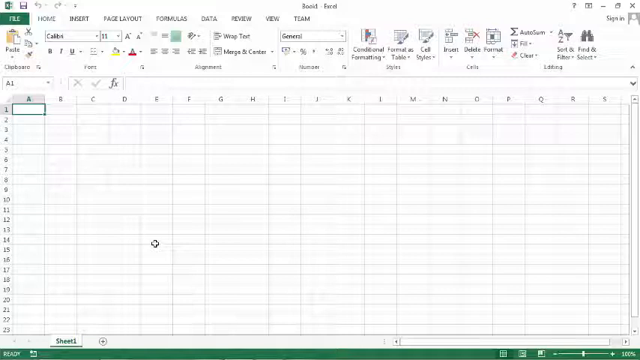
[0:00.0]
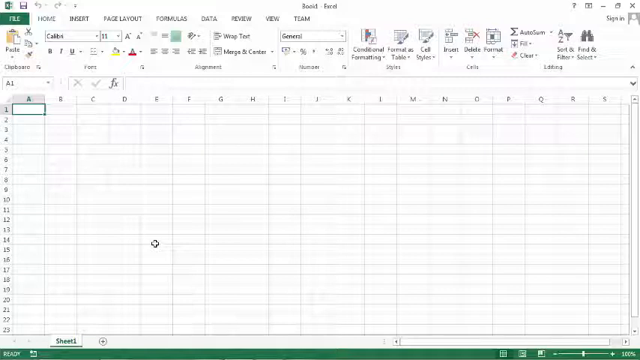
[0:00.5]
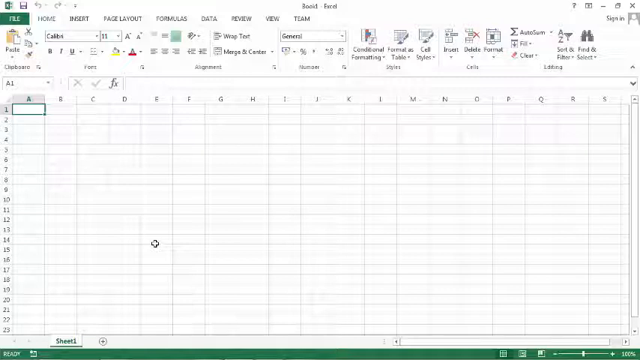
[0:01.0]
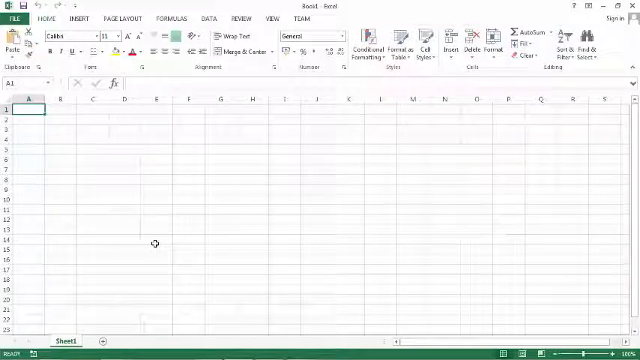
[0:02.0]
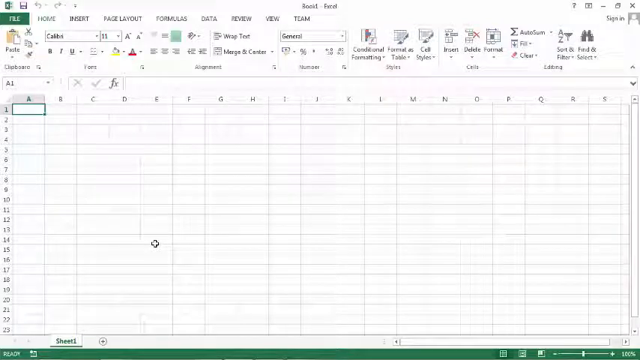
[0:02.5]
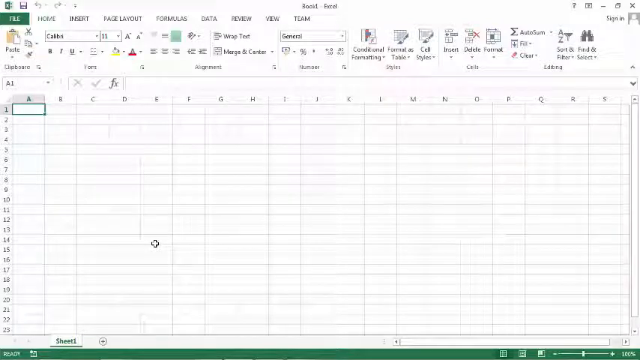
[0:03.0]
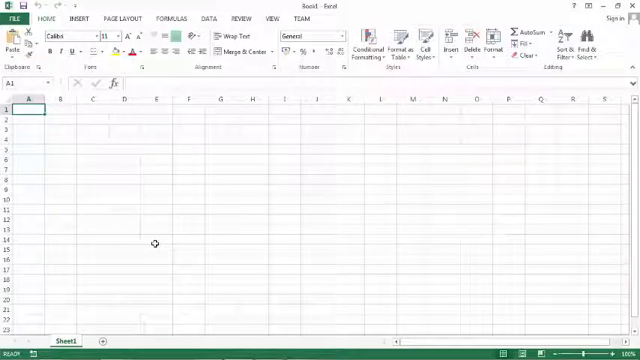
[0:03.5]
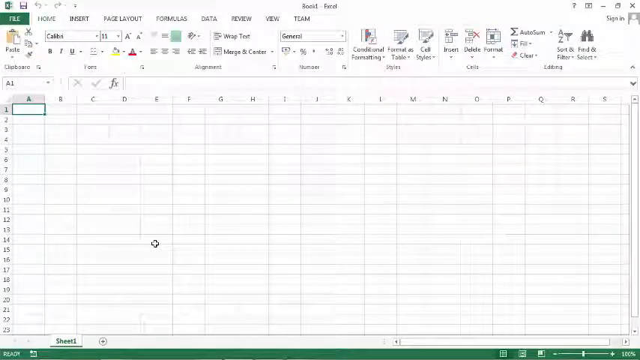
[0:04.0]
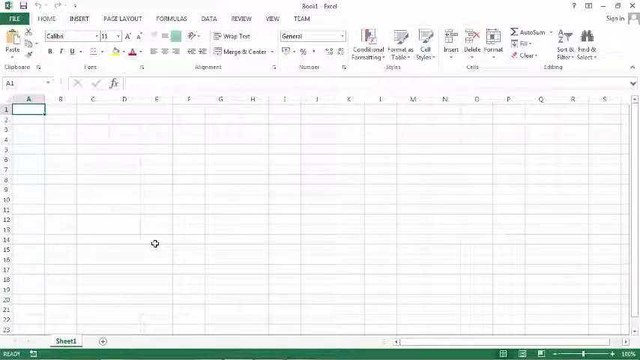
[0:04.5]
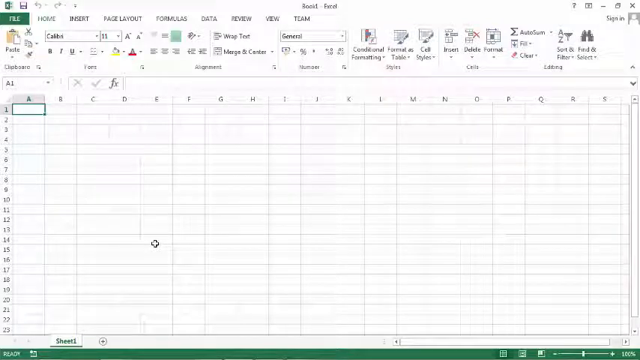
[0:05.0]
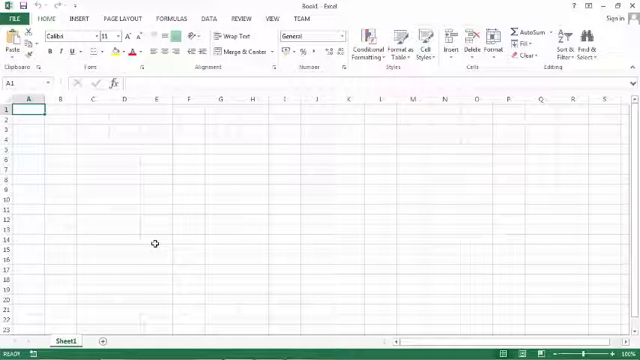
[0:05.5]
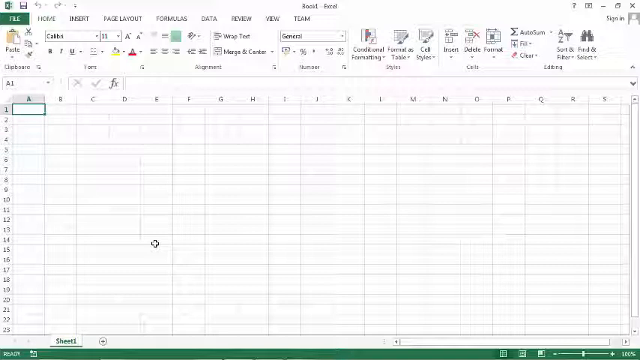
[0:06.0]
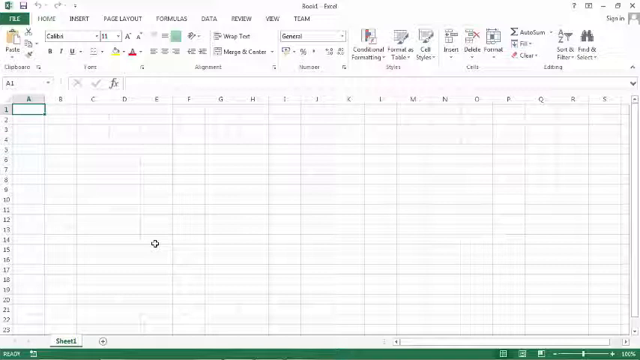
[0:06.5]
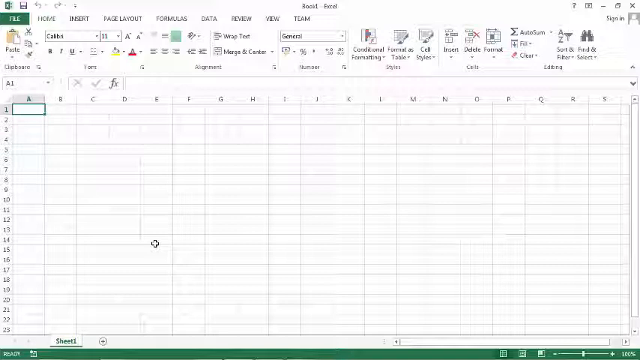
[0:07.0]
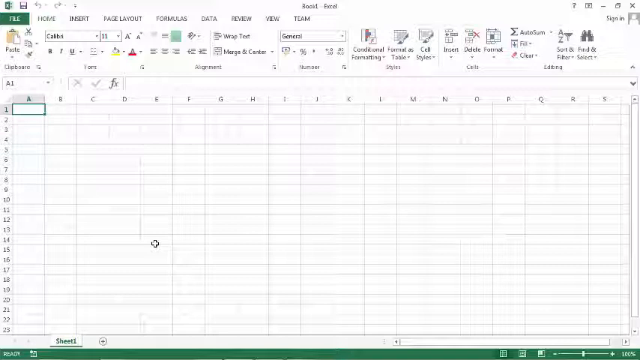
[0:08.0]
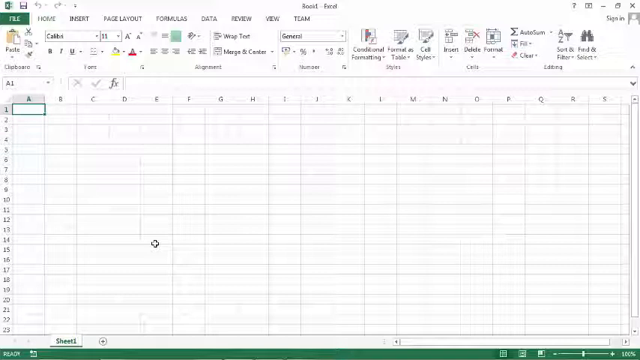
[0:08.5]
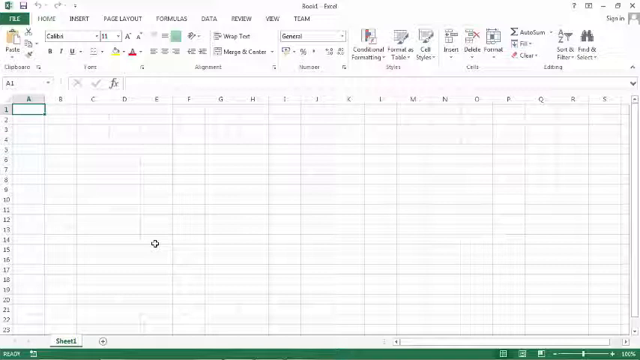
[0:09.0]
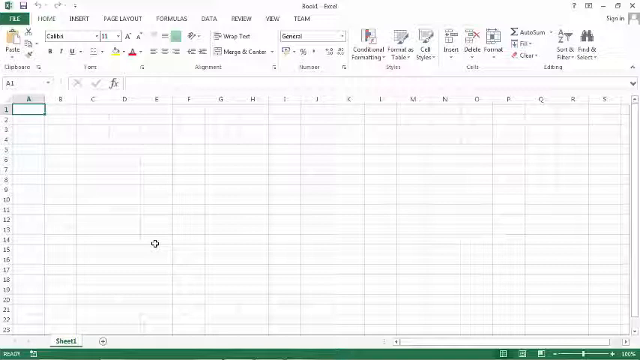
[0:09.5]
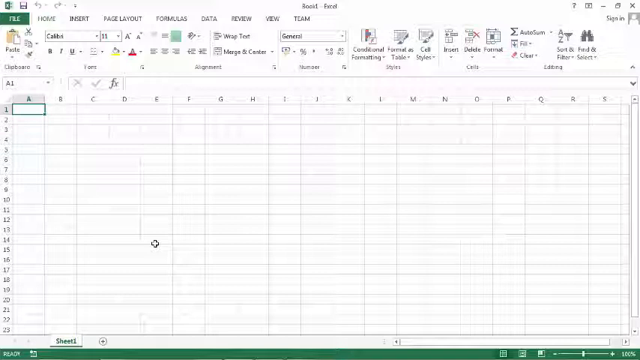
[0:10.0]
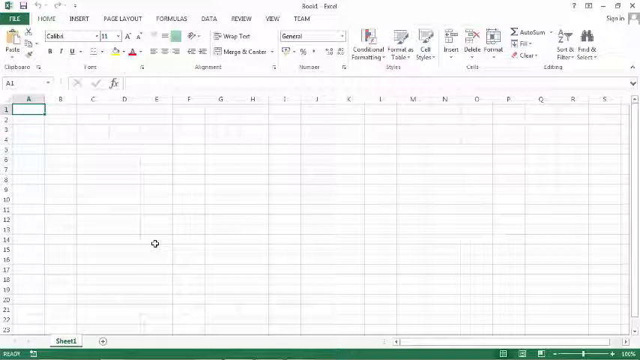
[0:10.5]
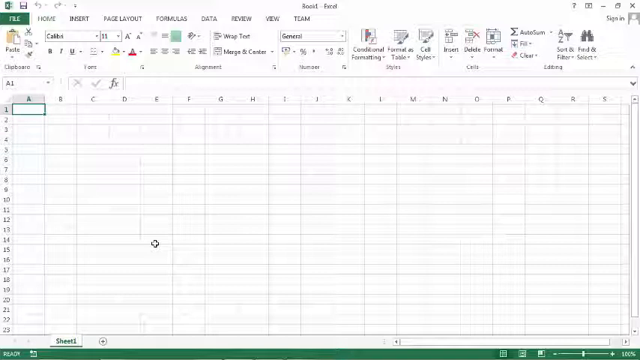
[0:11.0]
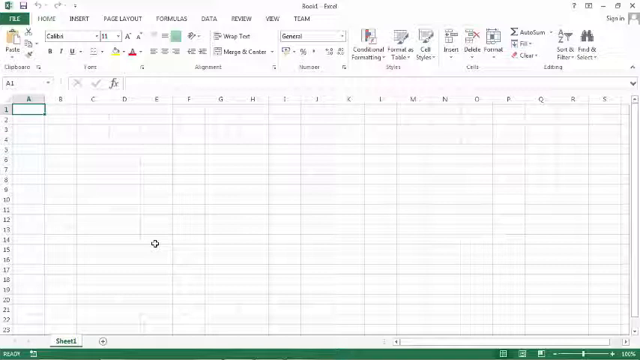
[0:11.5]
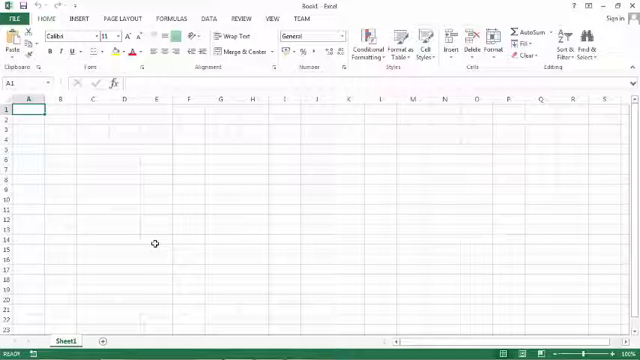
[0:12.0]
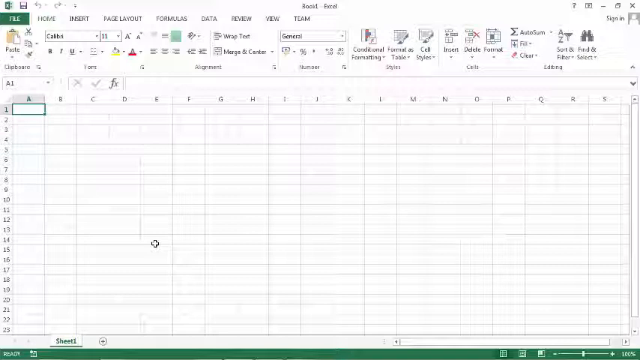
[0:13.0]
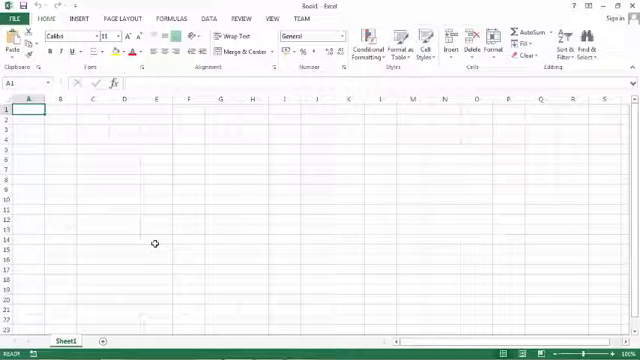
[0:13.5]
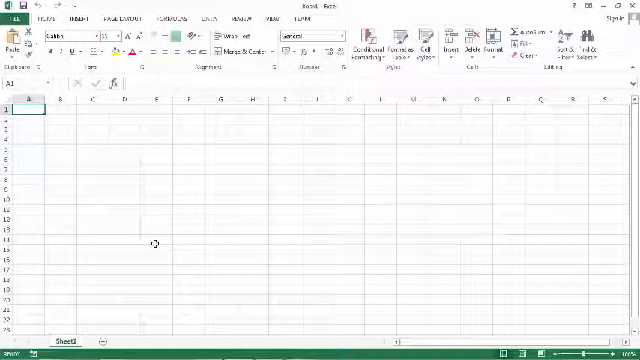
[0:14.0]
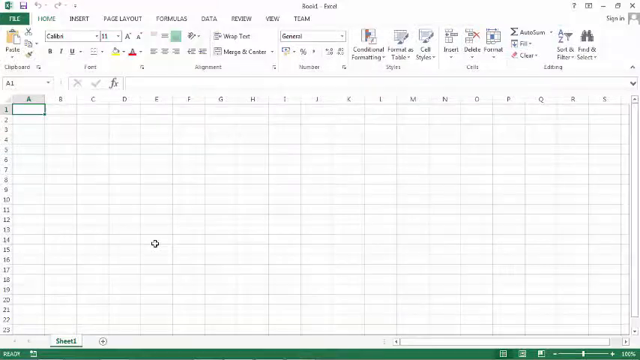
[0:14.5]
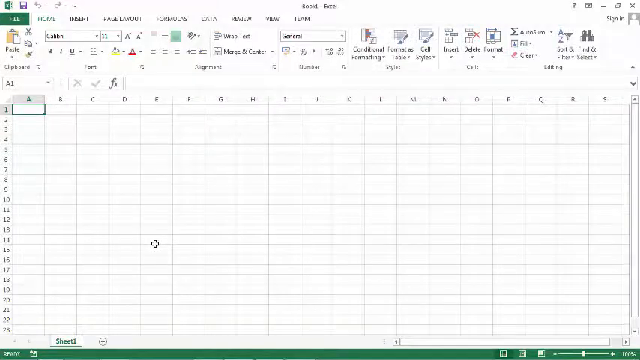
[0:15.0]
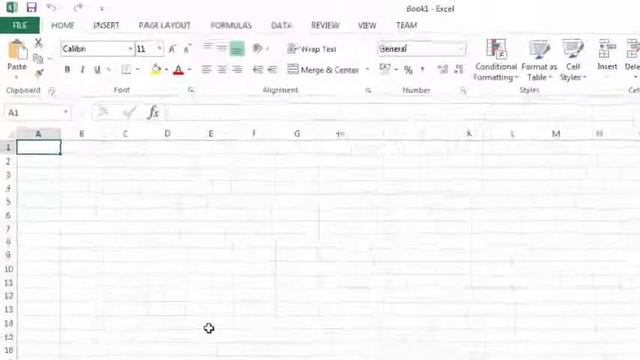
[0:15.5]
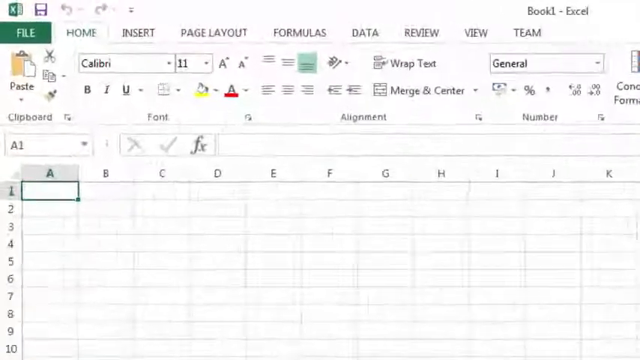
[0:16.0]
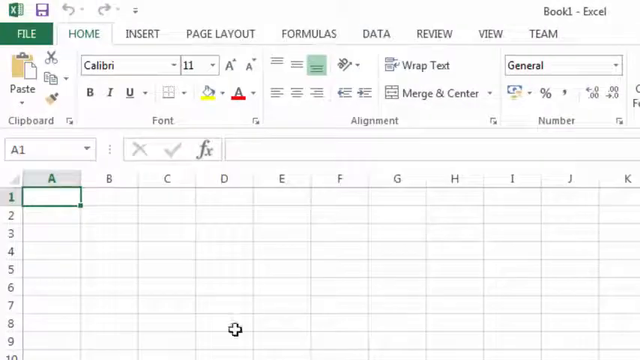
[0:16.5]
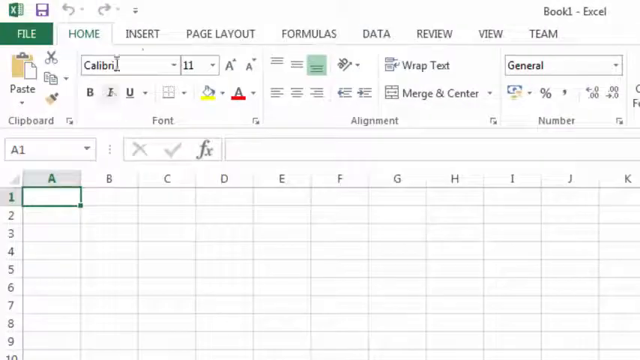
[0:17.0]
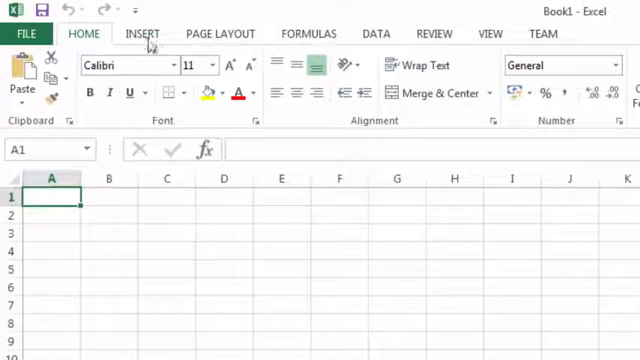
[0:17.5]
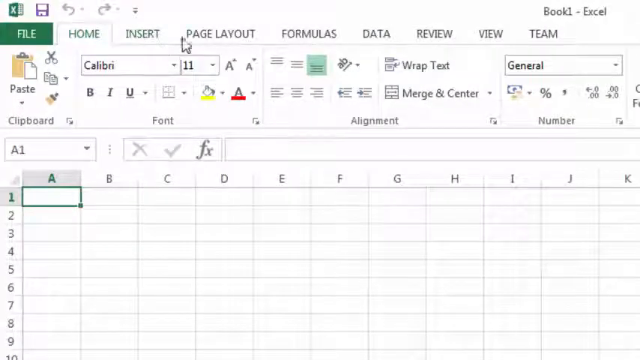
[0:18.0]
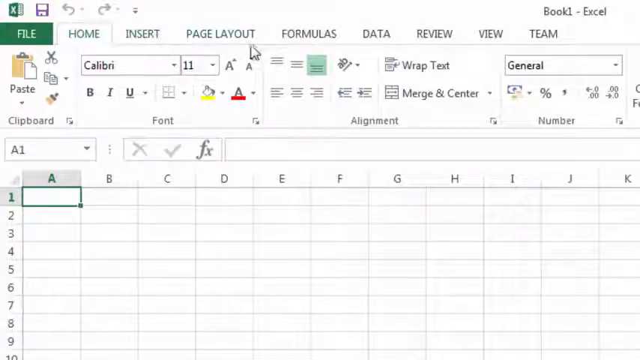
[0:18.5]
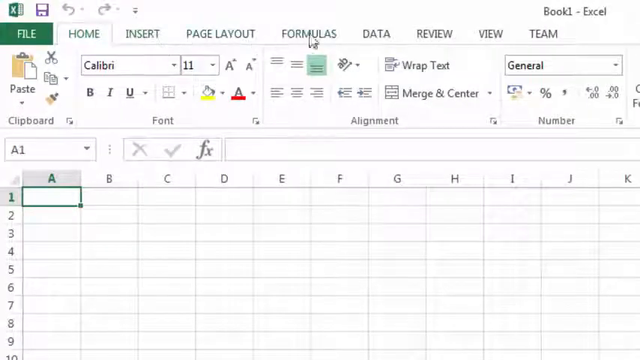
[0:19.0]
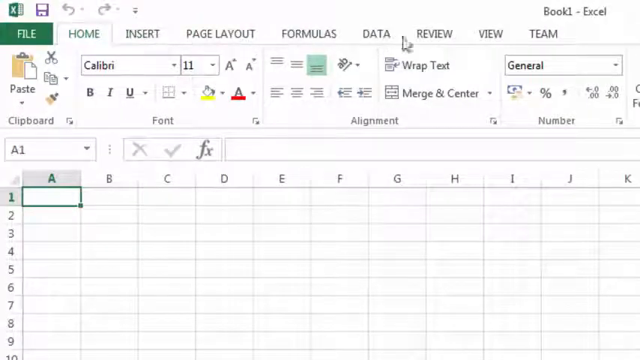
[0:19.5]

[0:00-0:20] An Excel page is shown with its tabs across the top: Home, Insert, Page Layout, Formulas, Data, Review, View and Team. The view shows the start of column A, cell A1. The video zooms in to show the different tabs that can be chosen in the Excel file: Home, Page Layout, Formulas, Data, Review, View and Team. The video demonstrates how to use Excel and how to insert information on the Excel page.